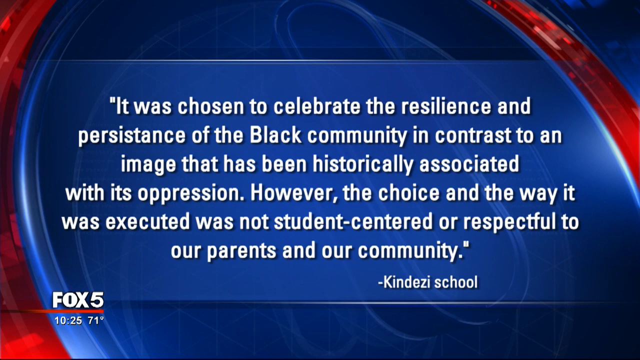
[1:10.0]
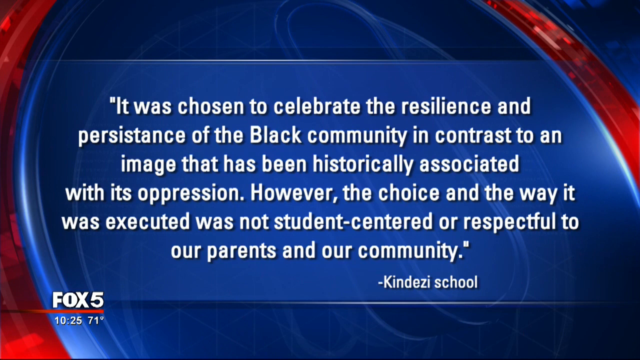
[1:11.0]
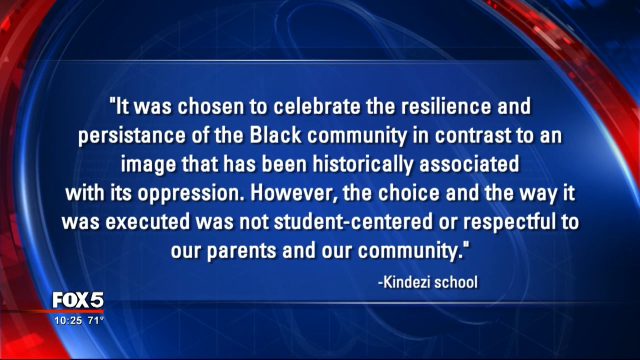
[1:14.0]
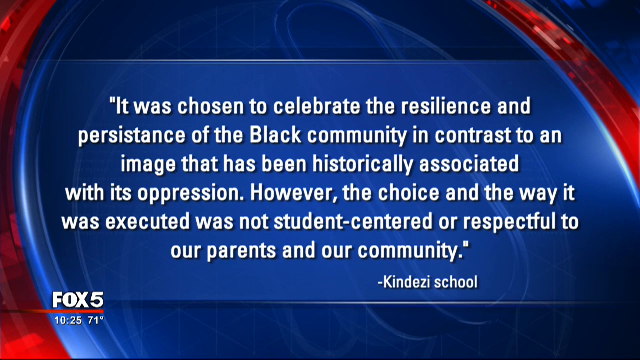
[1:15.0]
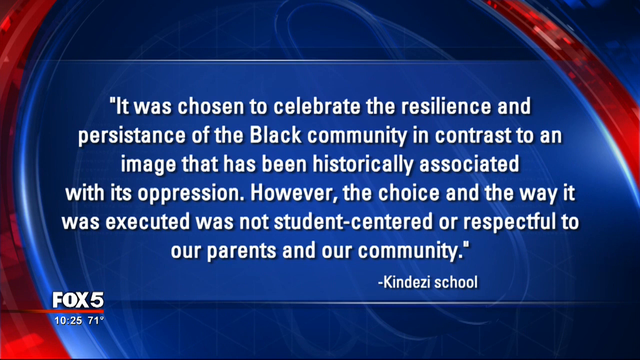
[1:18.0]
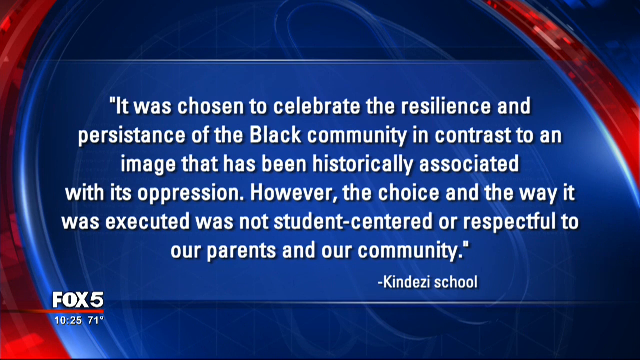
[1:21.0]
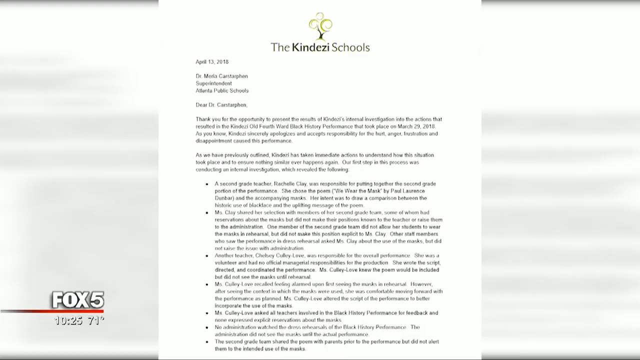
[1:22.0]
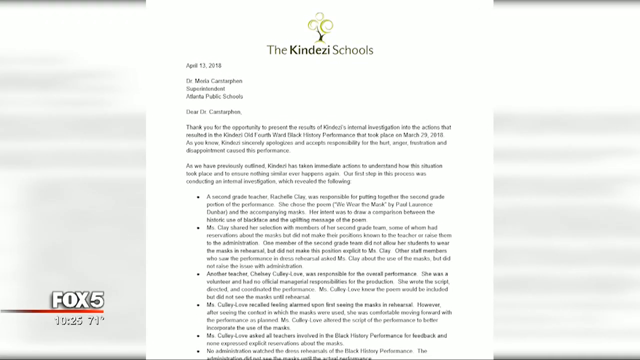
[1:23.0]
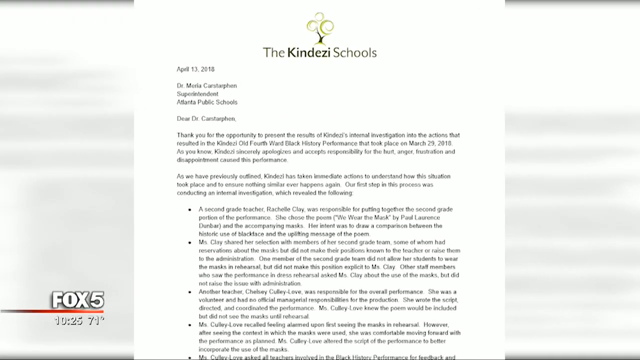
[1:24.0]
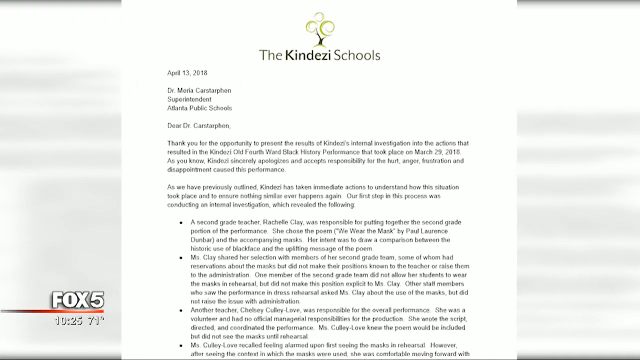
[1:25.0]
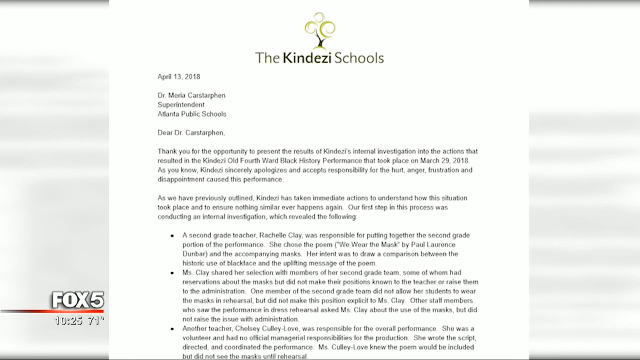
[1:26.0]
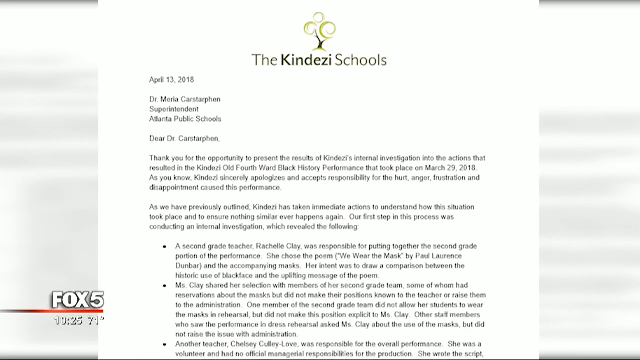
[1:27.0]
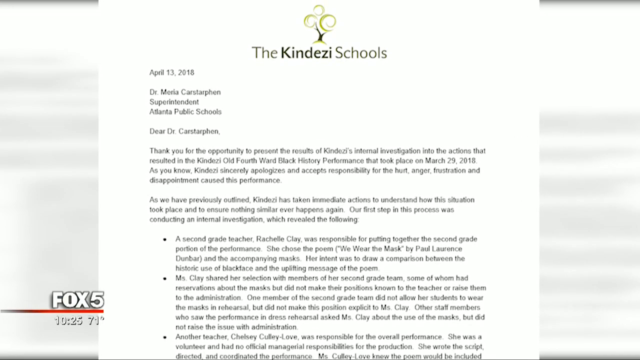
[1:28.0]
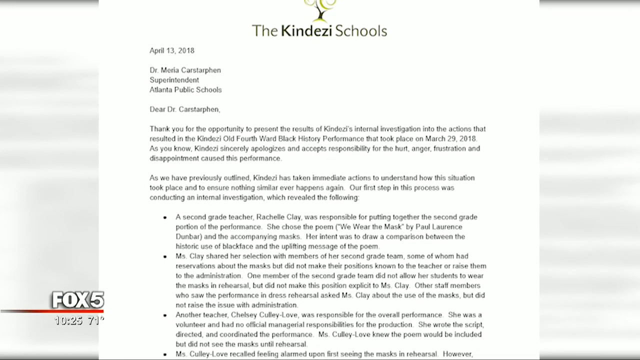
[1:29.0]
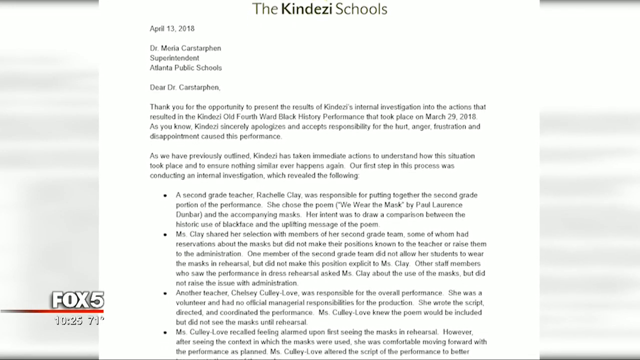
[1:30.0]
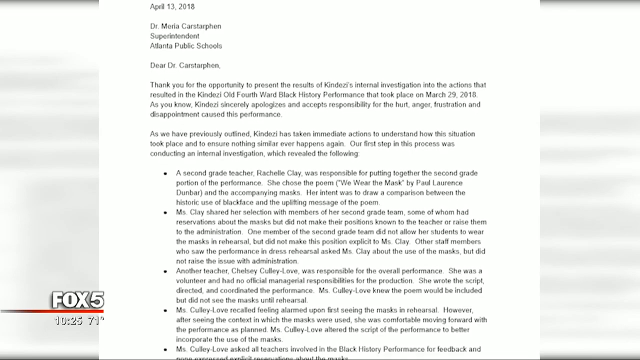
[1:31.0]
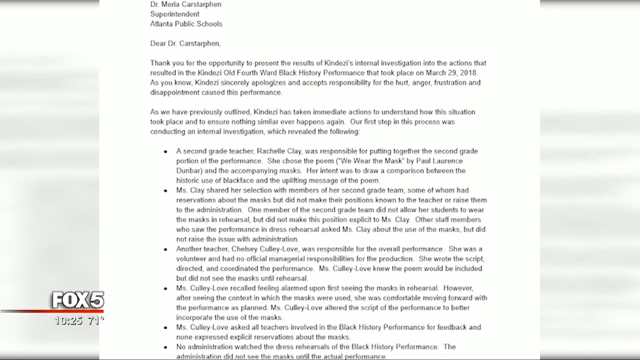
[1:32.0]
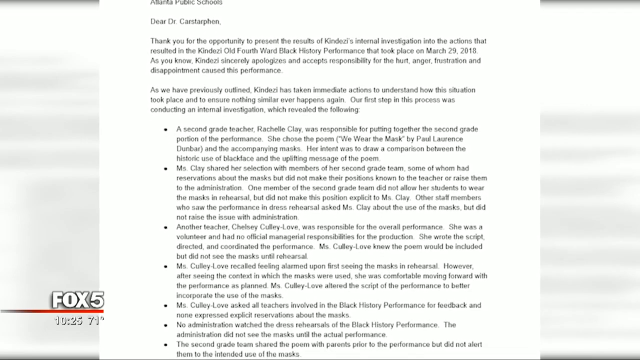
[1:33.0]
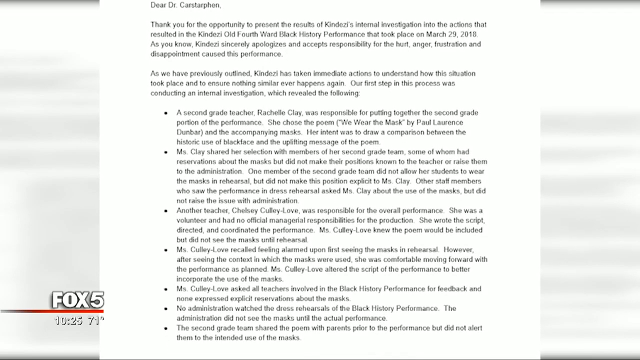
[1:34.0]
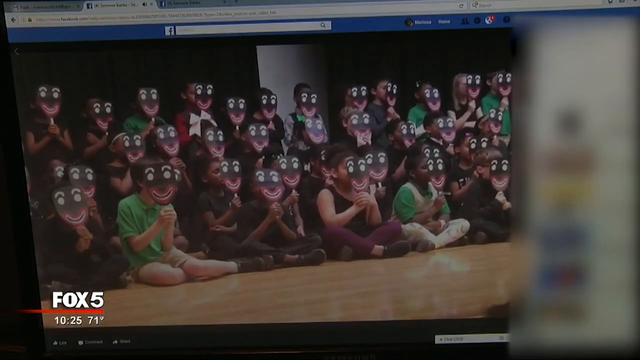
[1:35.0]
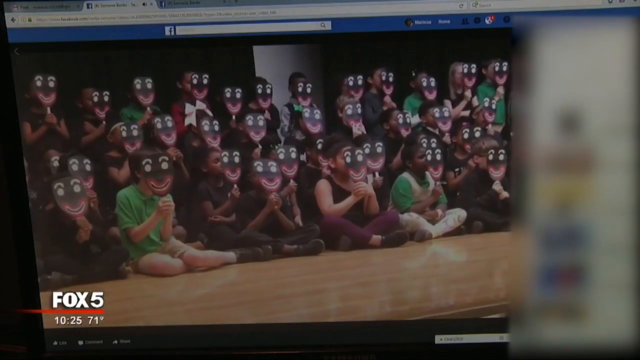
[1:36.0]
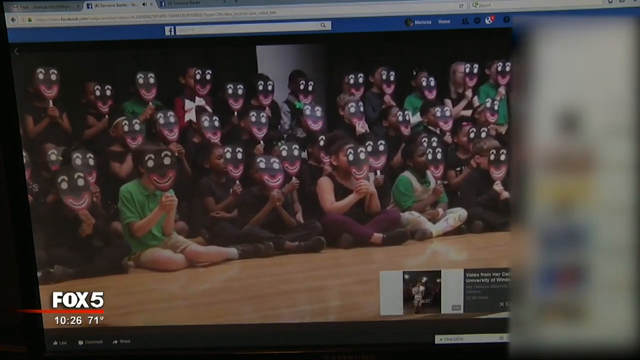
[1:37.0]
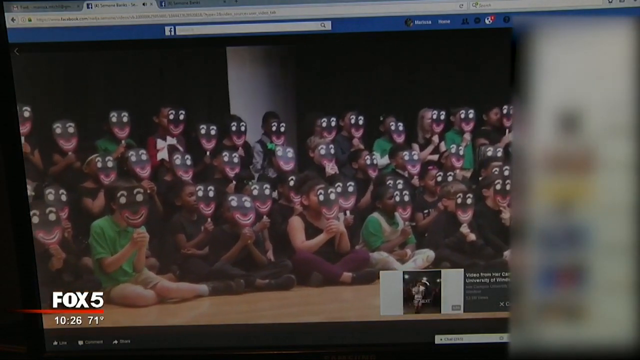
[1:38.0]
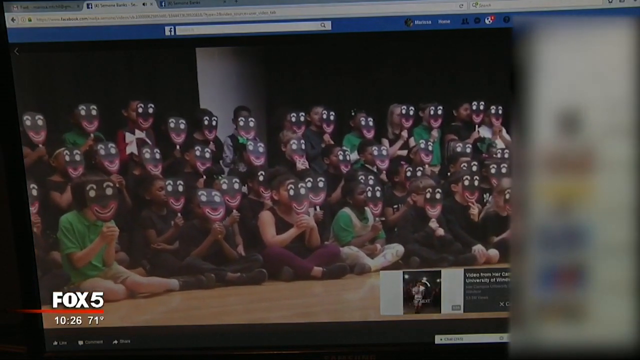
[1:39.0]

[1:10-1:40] Fox 5 News shows a statement from Kindezi school: "it was chosen to celebrate the resilience and persistence of Black community in contrast to an image that has been historically associated with its oppression. However, the choice and the way it was executed was not student-centered or respectful to our parents or community." The statement appears on a blue and red background in Fox 5 News colours. Next comes a letter from Kindezi school dated the 13th of April 2018, addressed to a doctor named Dr. Cantarphen. The letter is long and blurry and cannot be read. At the end of the scene, the children hiding behind black and white masks are shown again.